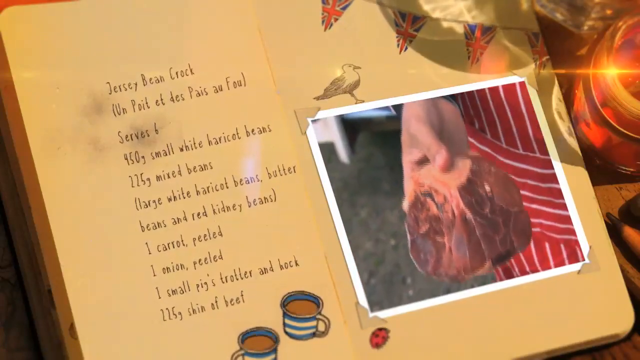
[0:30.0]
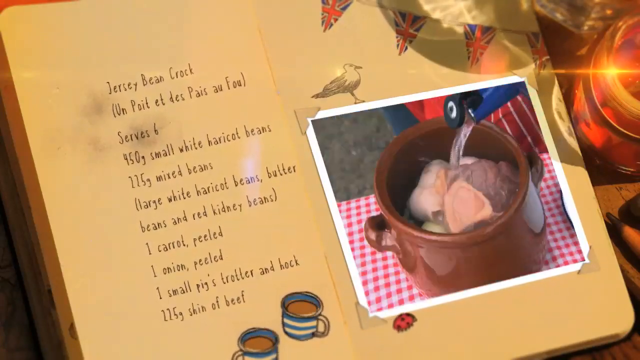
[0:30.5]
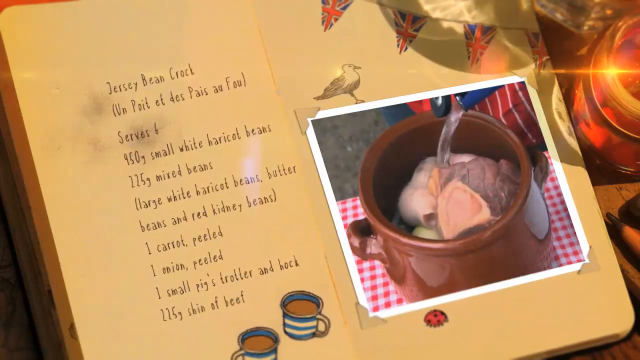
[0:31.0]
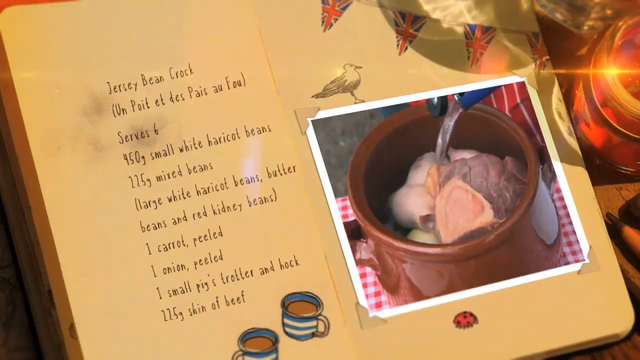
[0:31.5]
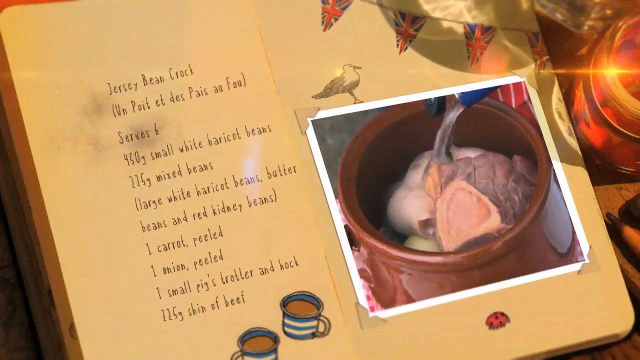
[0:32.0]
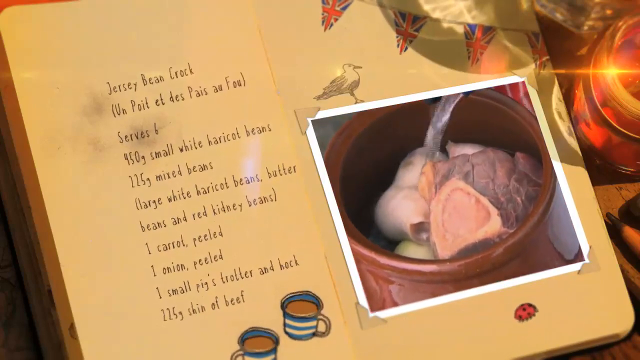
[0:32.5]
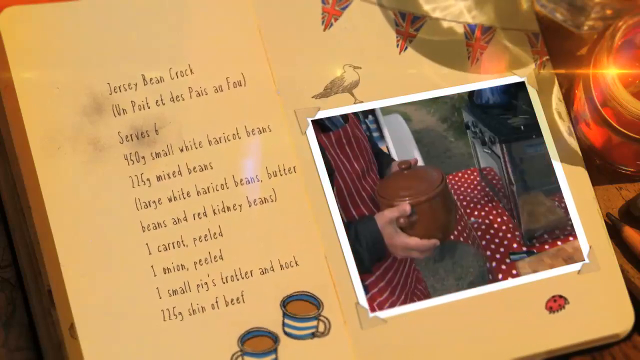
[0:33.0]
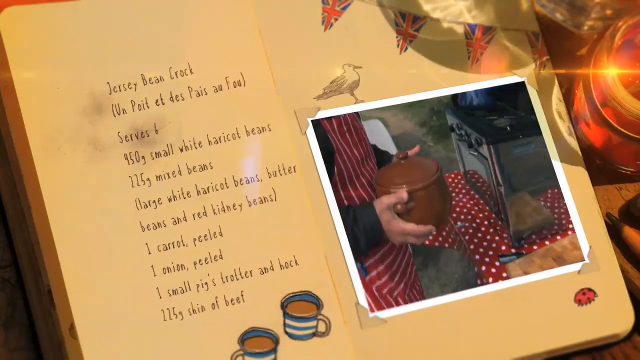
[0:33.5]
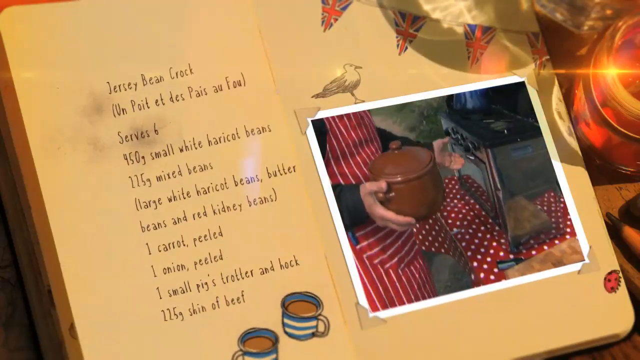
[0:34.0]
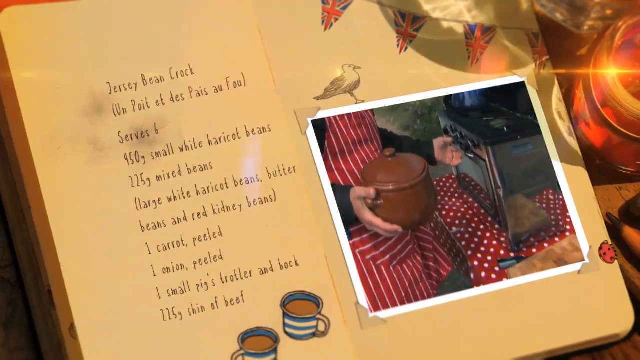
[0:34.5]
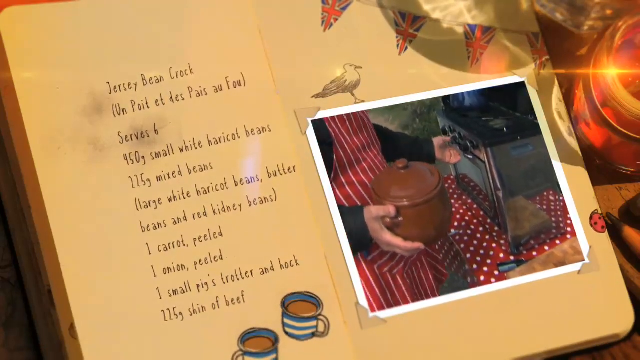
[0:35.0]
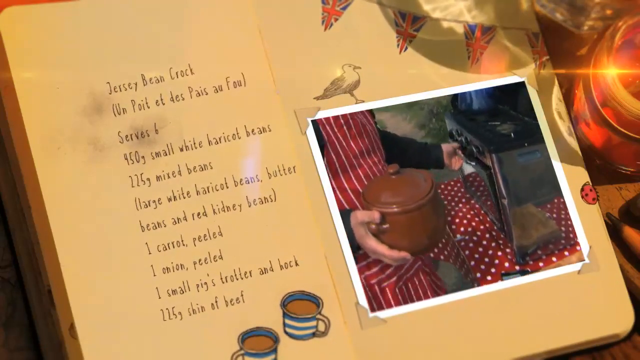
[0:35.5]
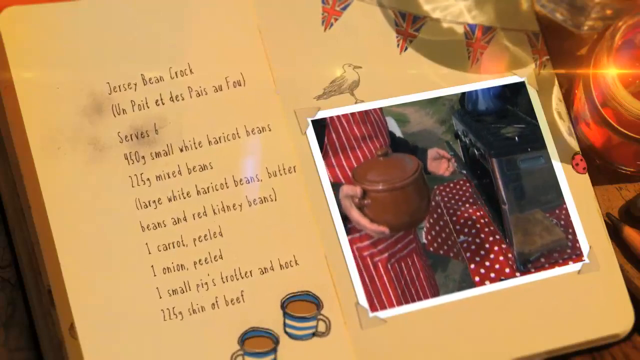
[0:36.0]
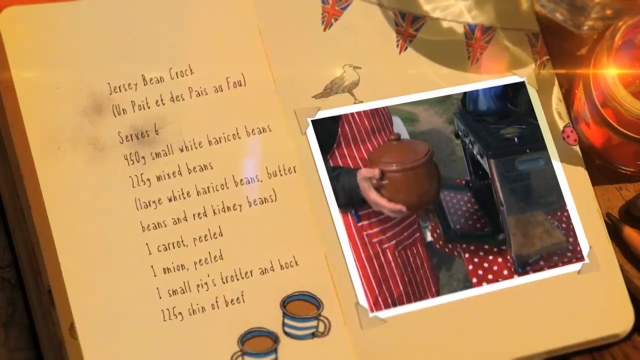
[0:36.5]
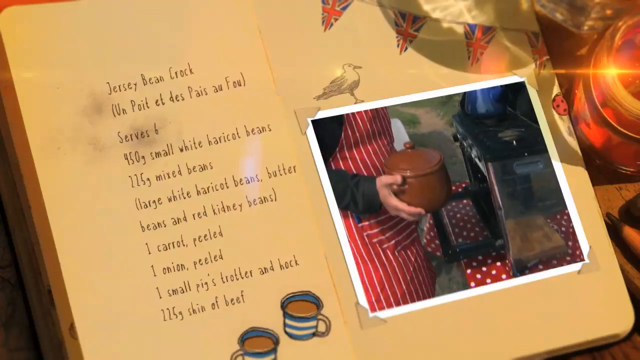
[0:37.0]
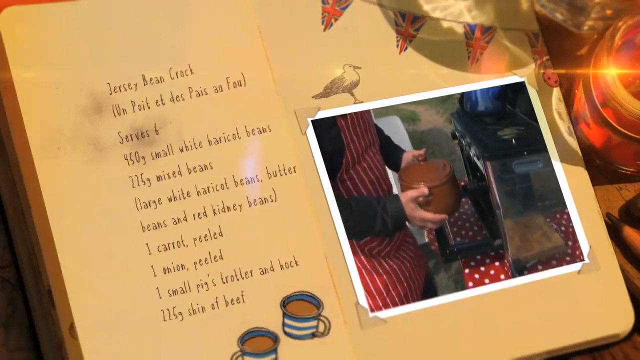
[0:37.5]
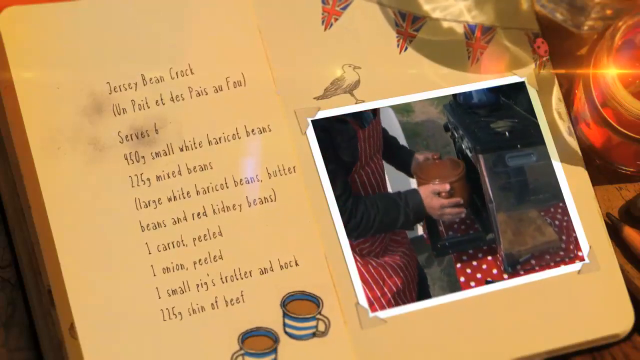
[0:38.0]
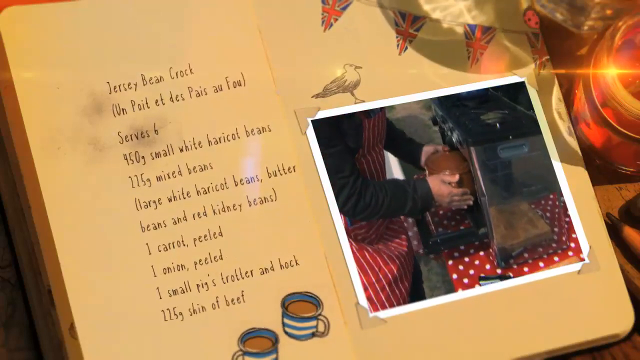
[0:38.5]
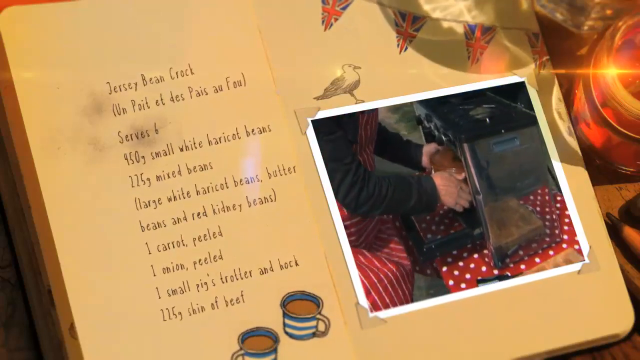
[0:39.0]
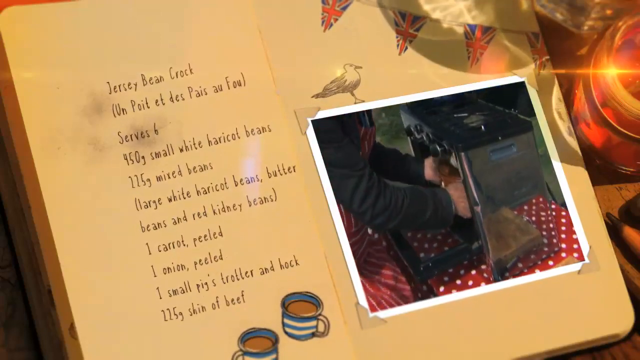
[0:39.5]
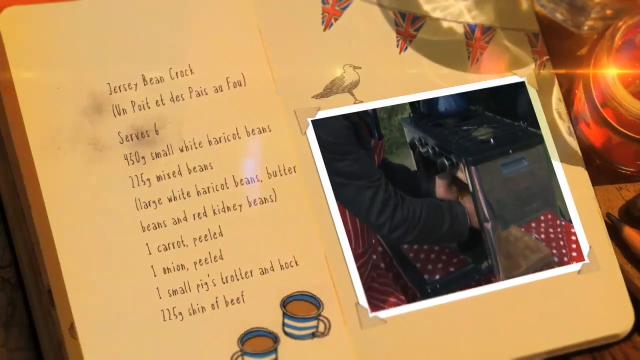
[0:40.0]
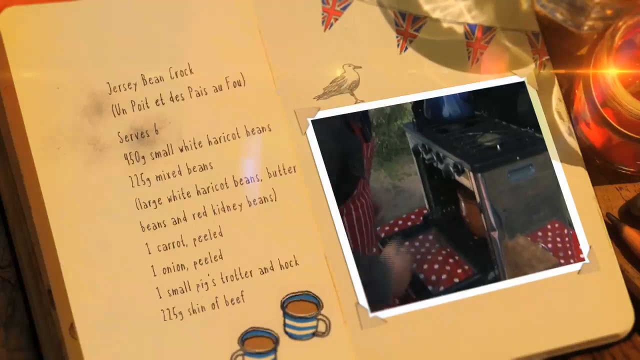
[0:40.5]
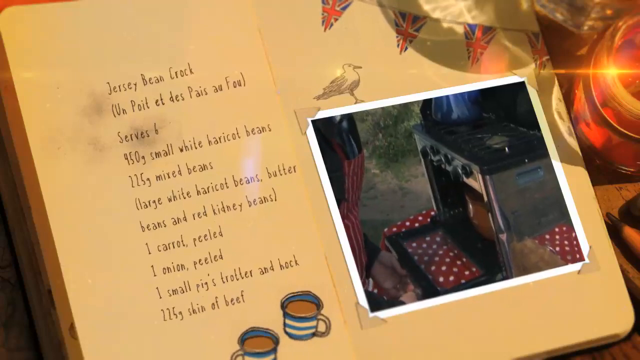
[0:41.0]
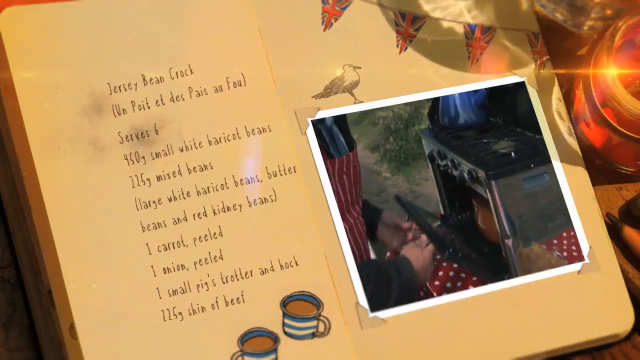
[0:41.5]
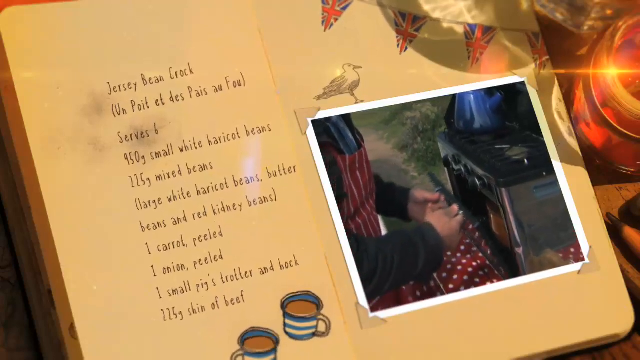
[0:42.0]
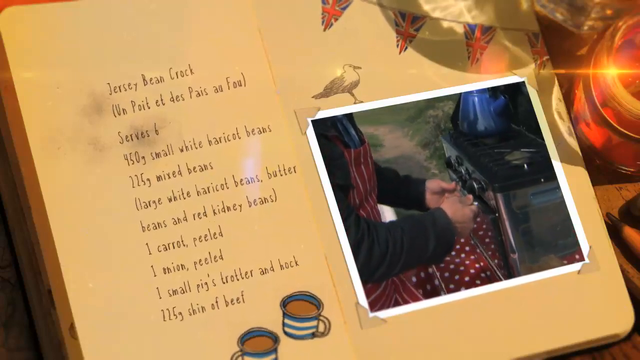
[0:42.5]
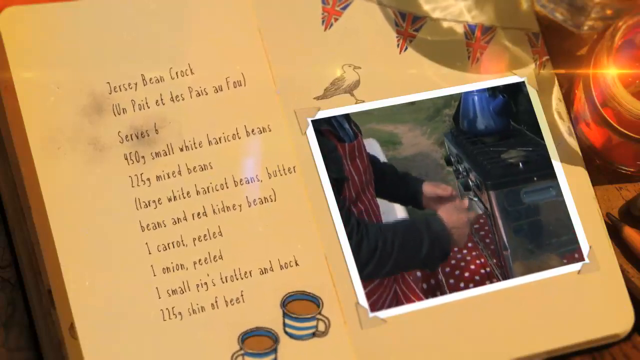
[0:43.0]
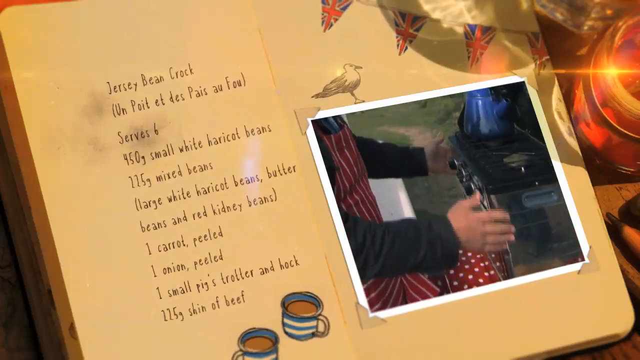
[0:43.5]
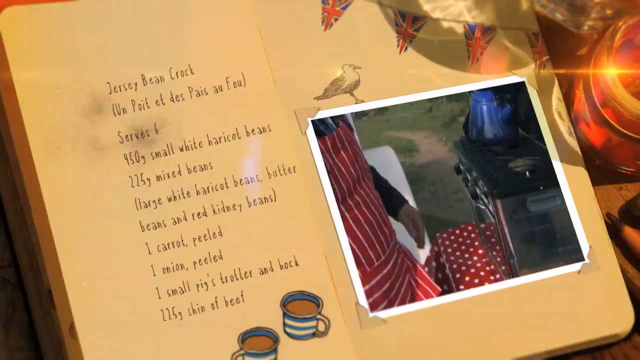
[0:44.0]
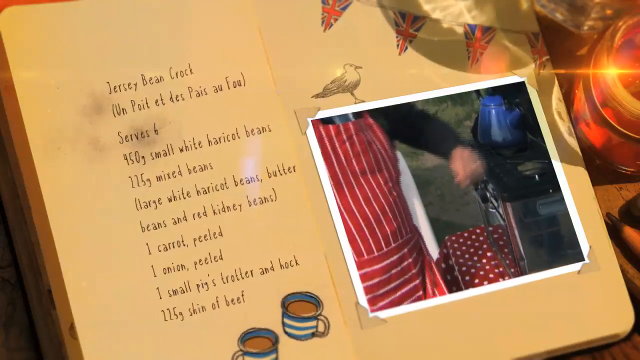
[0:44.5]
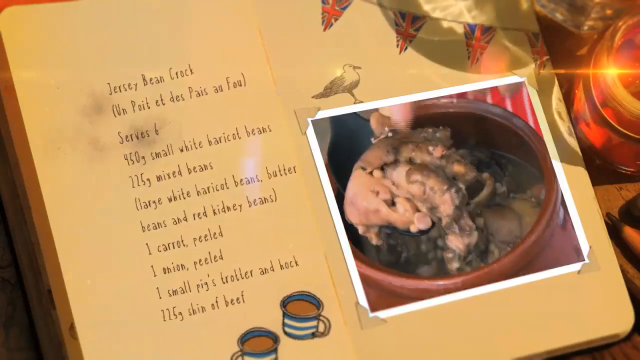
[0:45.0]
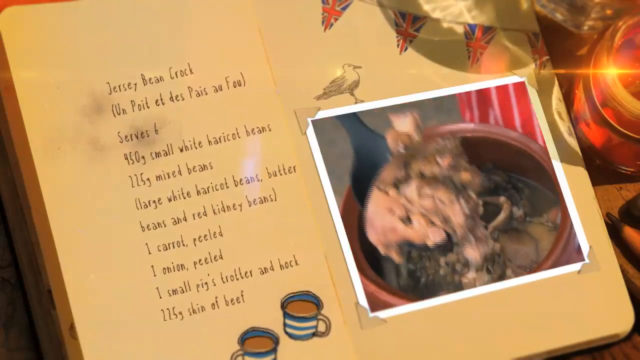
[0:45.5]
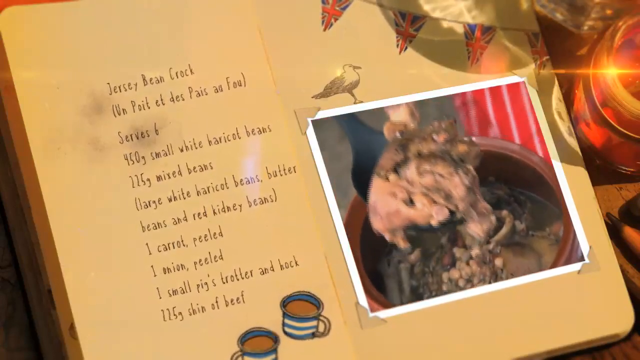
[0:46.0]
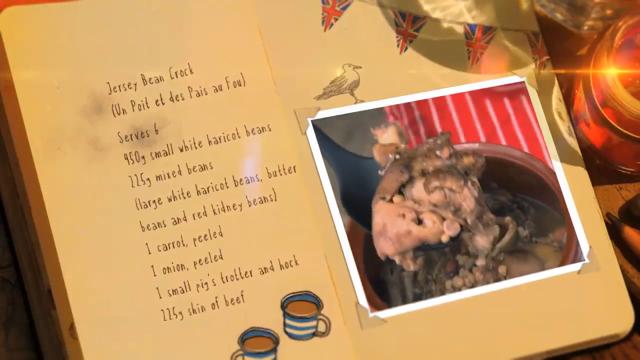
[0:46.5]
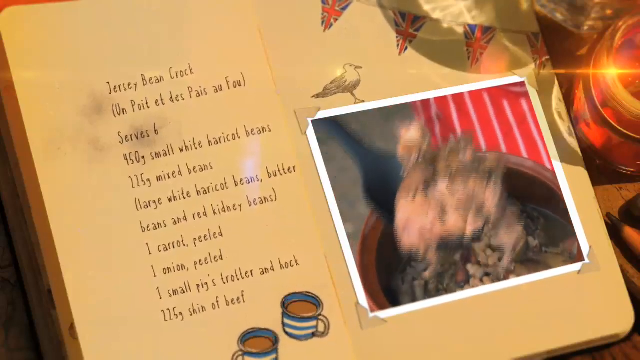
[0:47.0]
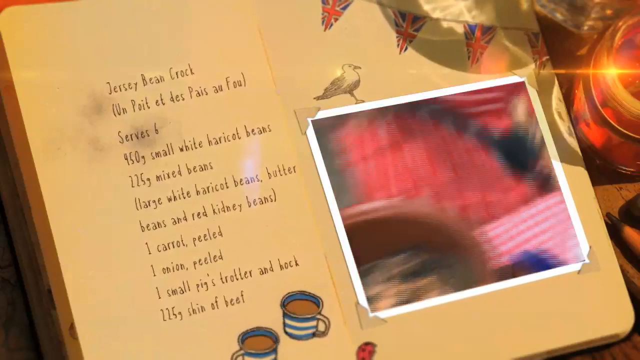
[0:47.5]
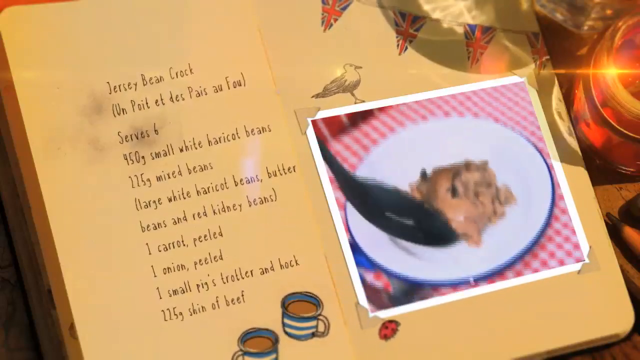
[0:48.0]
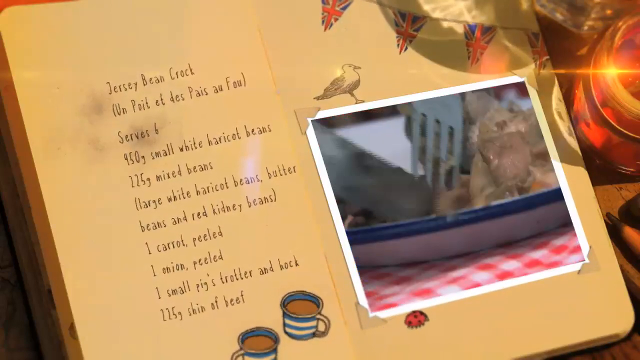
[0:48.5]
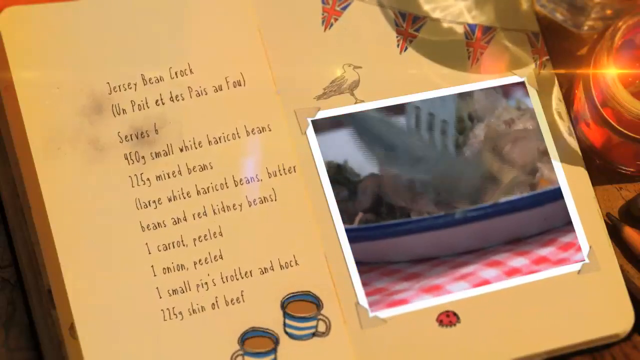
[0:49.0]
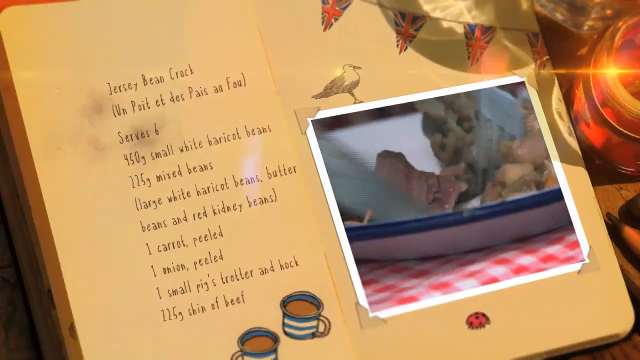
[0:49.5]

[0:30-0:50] A close-up shows his cooking techniques. He shows off a chunk of meat, then the video cuts to him pouring water into the casserole dish with everything inside. He places the dish gently into an oven, closes the oven door and taps the side. The video then shows him with the finished dish. He takes a spoonful out, which looks fully cooked, shows it to the camera, and places it onto a white plate. He then uses a fork and a knife to eat the dish.